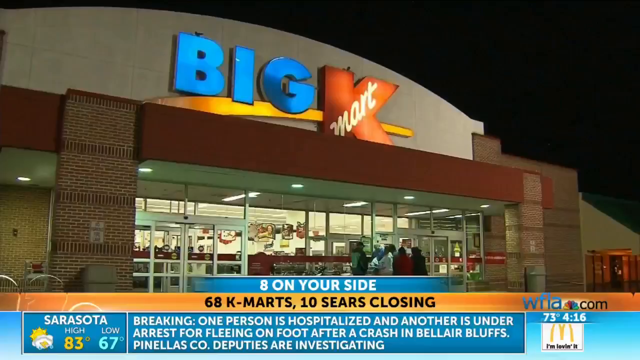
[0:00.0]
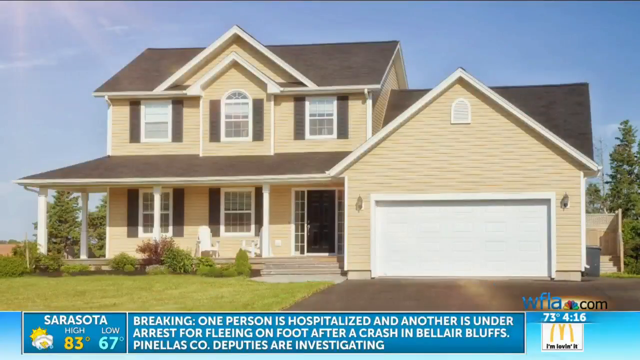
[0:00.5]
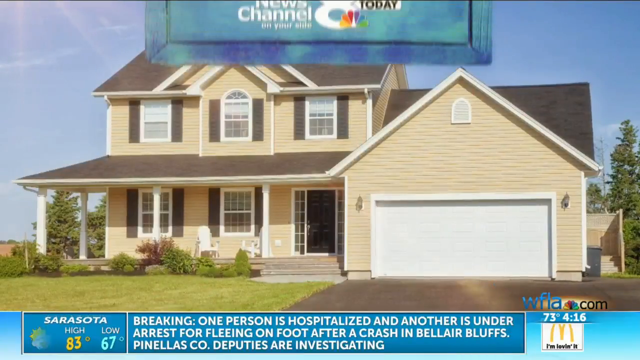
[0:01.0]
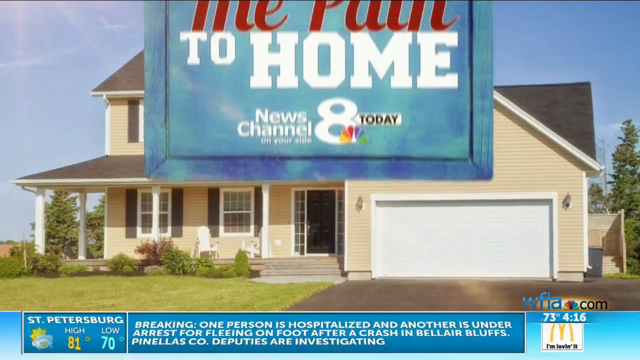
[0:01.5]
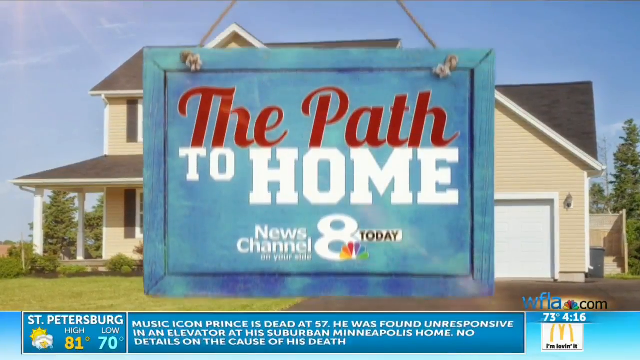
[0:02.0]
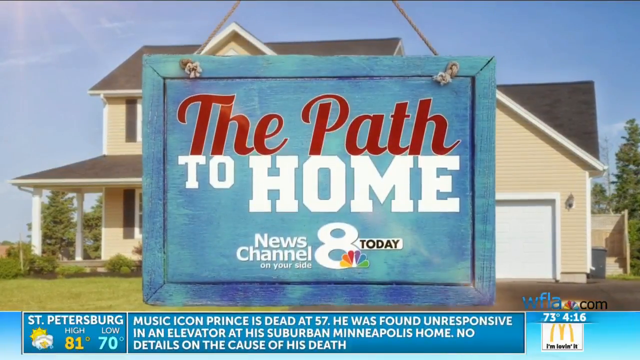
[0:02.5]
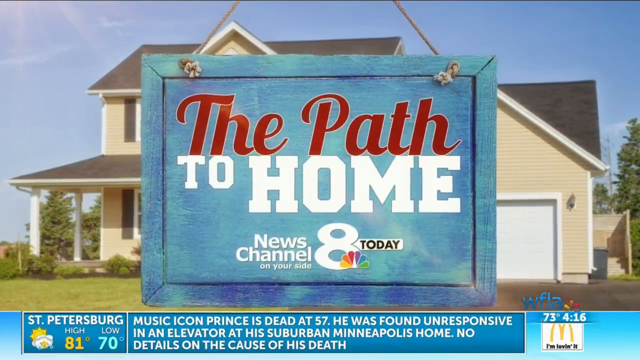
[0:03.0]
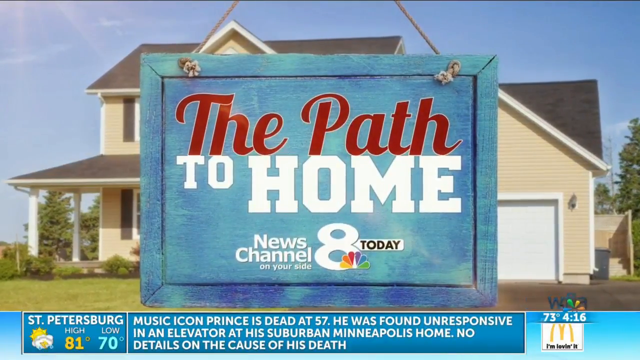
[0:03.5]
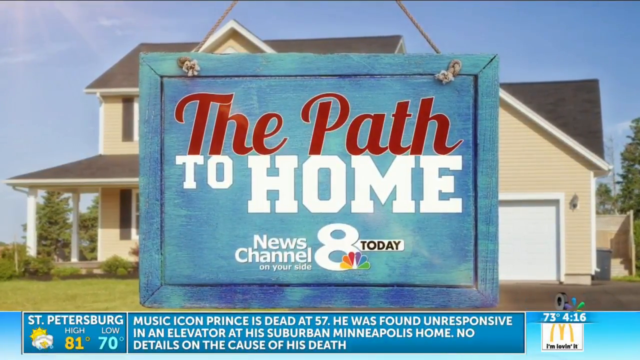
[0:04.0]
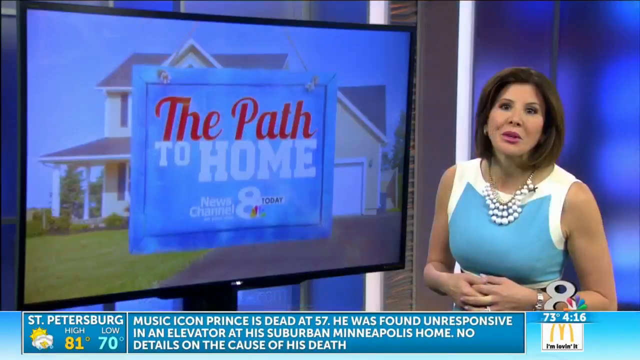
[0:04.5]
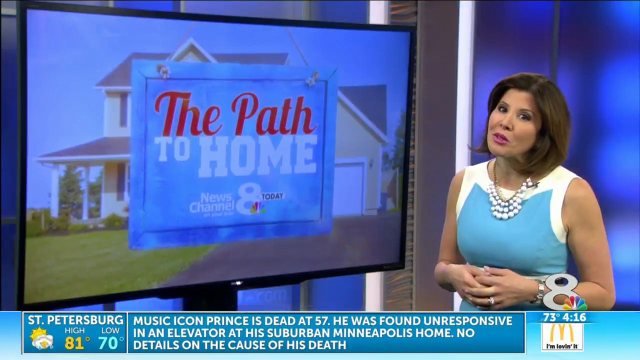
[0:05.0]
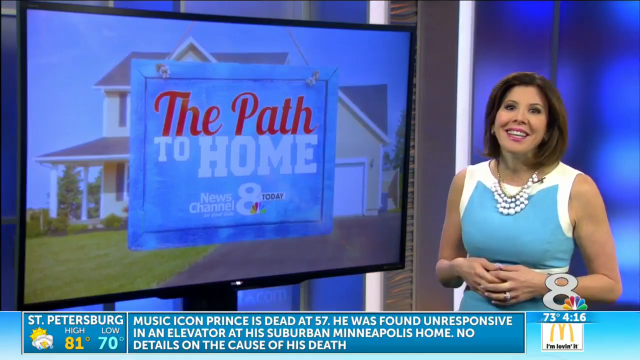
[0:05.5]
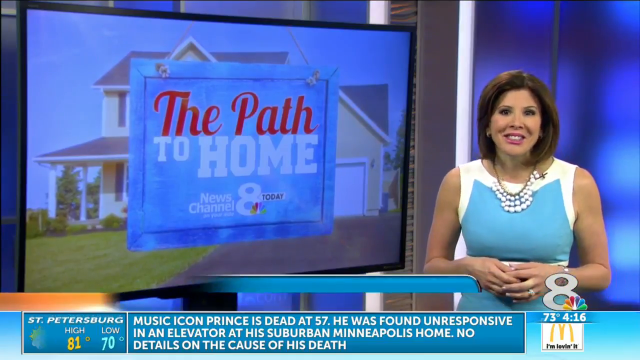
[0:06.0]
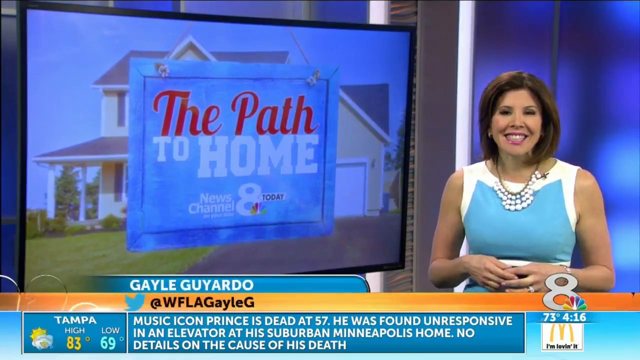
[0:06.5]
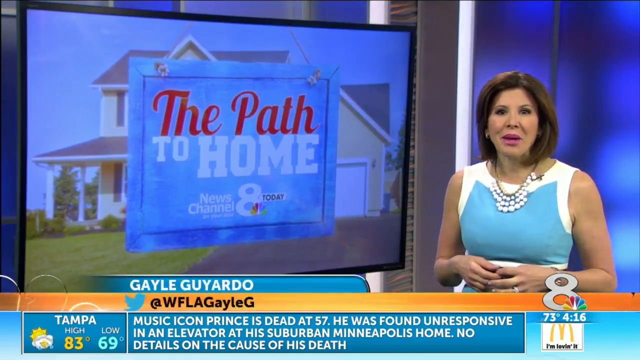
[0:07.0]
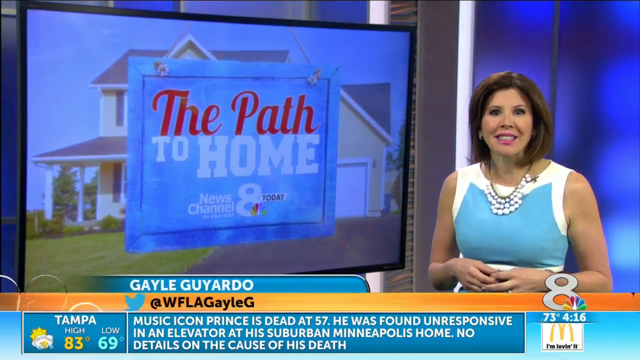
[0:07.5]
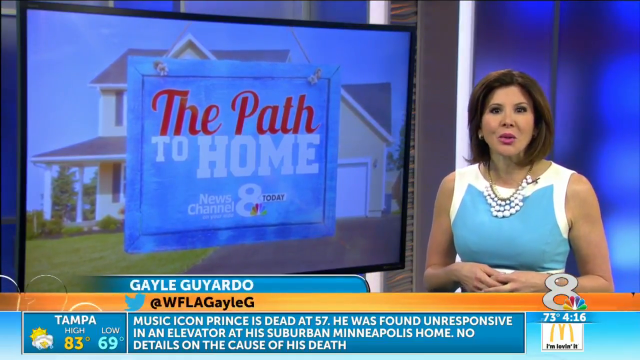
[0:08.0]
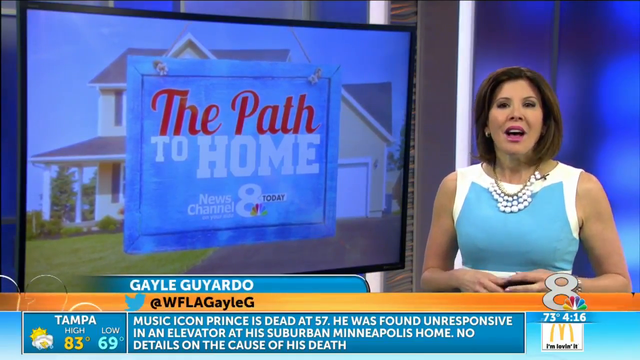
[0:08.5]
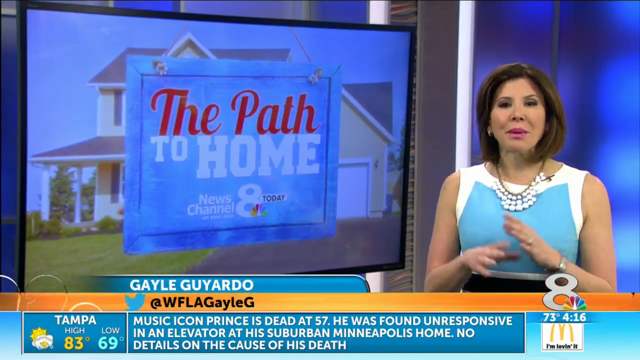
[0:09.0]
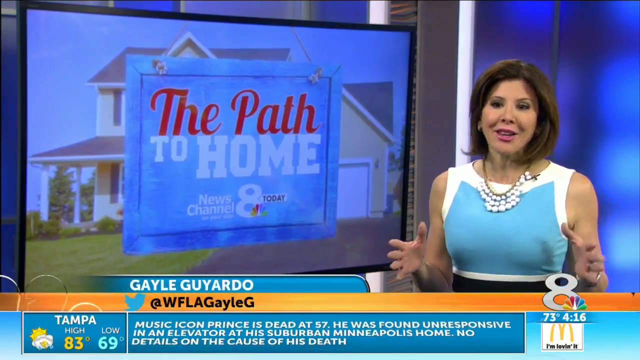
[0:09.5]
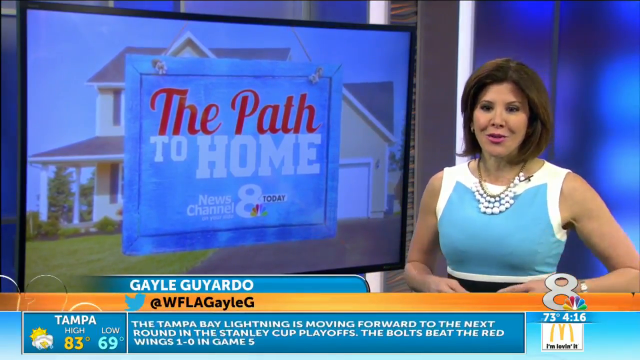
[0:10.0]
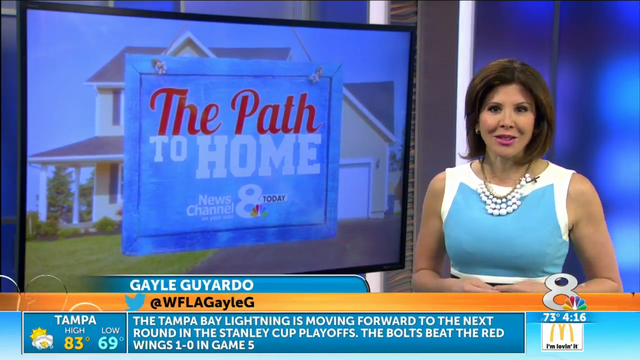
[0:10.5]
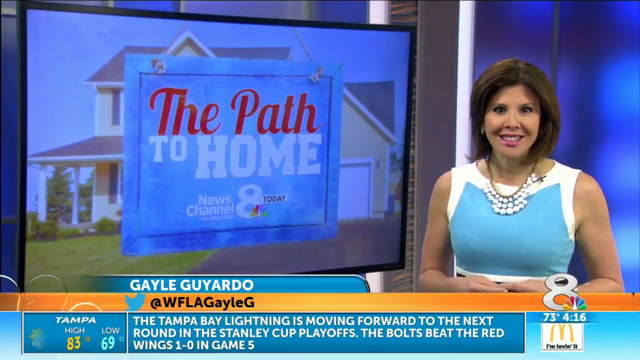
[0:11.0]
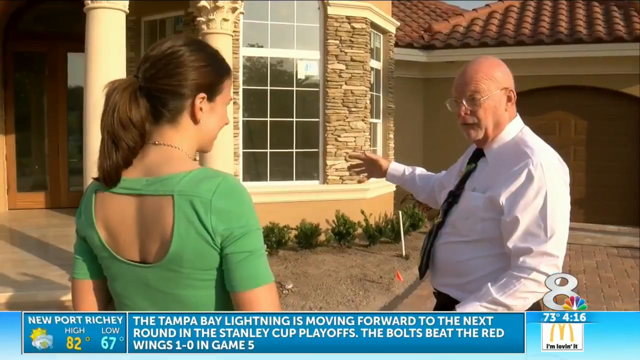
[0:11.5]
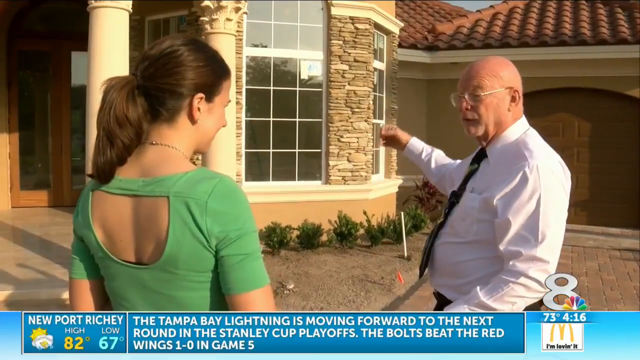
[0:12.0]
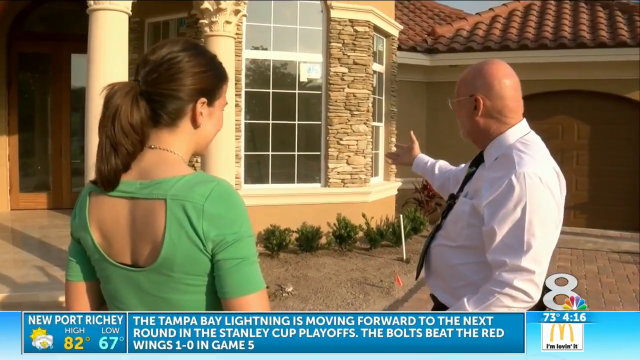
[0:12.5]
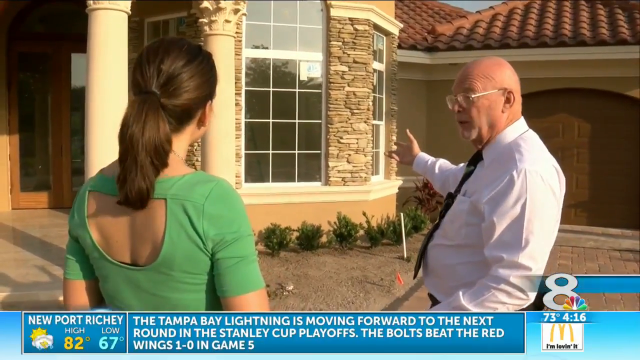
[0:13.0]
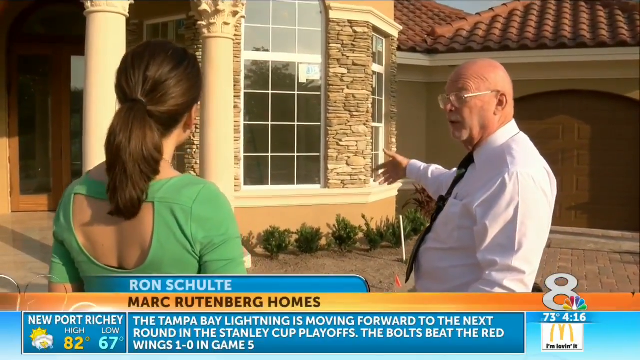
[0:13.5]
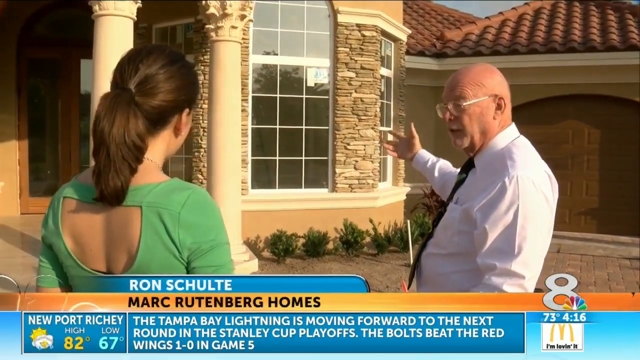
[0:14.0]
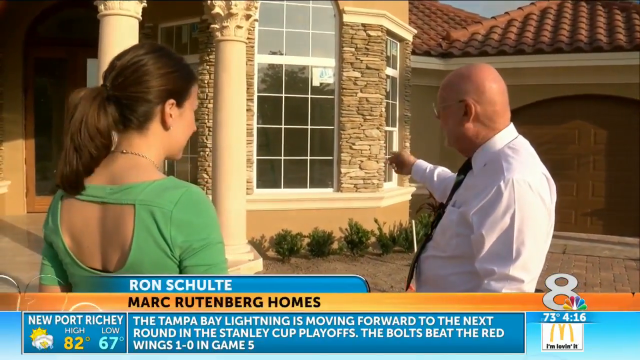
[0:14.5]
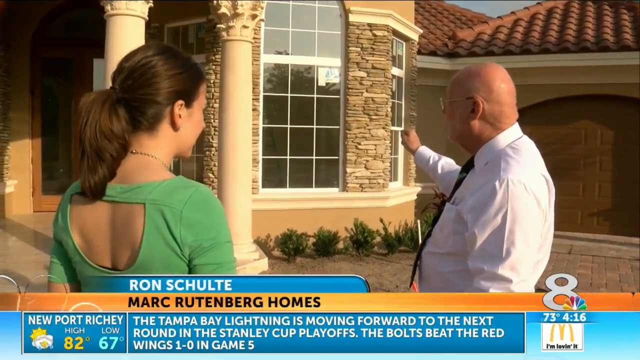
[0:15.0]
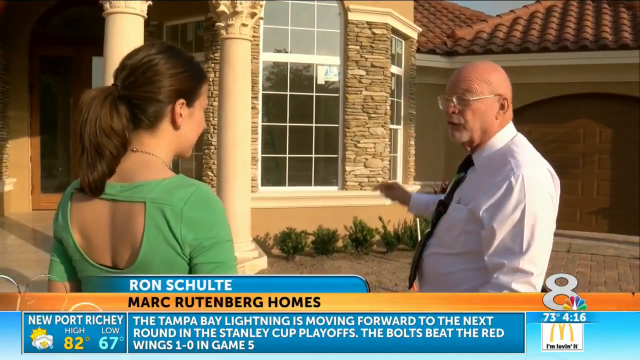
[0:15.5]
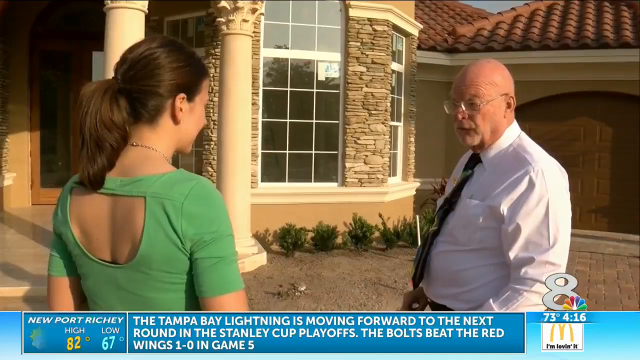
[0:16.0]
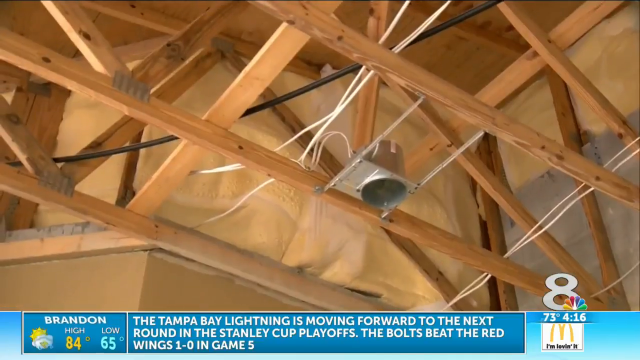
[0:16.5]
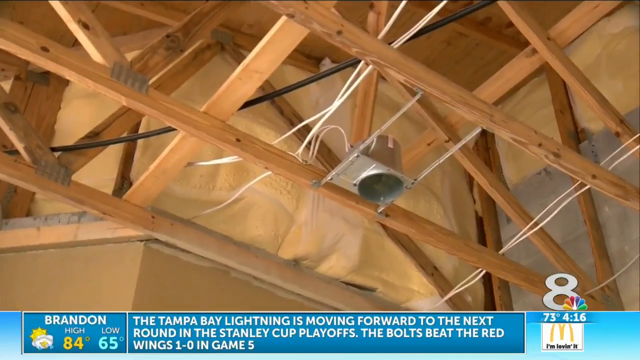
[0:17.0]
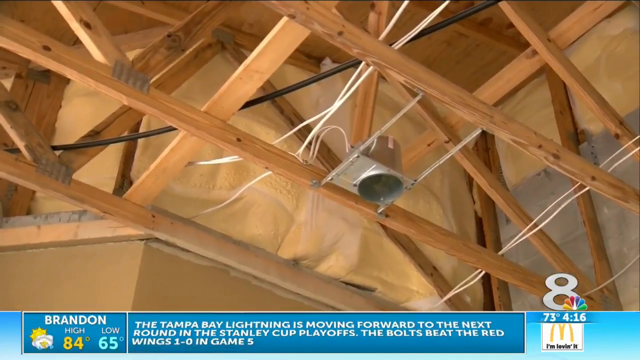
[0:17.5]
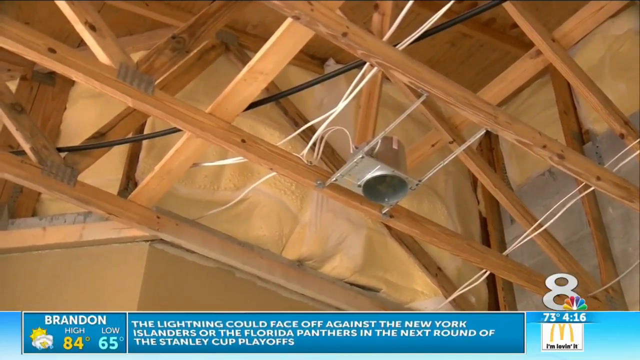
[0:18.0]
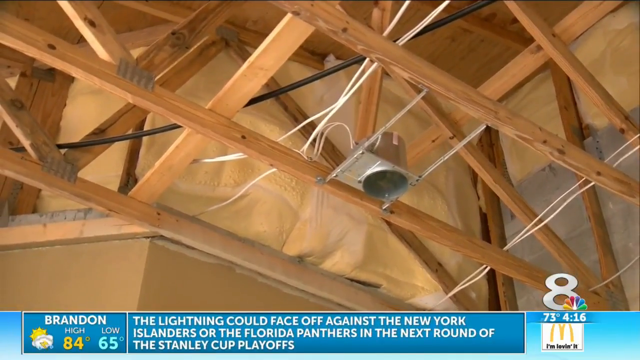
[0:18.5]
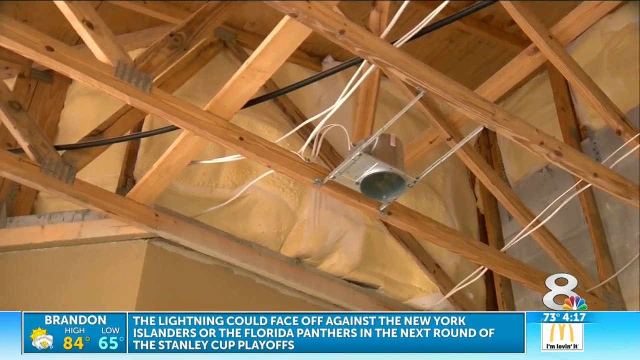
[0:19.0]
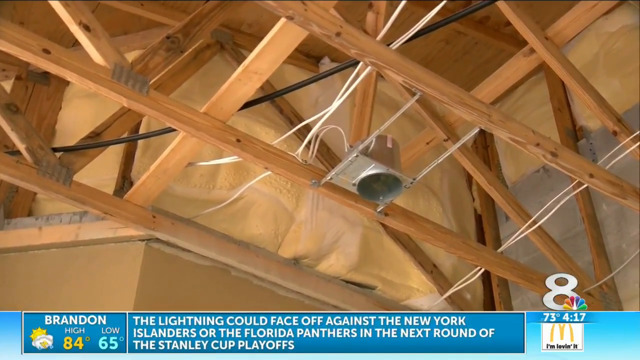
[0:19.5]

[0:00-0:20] The video opens with a very quick look at a Kmart store sign reading "BIG Kmart" in all capital letters, with "BIG" in blue and Kmart in its typical logo with a red K. The title of what is apparently a news story also appears, about Kmart and Sears closing. Then what seems to be the next segment begins, called The Path to Home, by News Channel On Your Side 8 Today. The segment starts with the same logo on the left, shaped somewhat like a hanging sign put out in front of a restaurant when it is open. On the right is the woman who is apparently hosting the segment, wearing an ice blue dress.